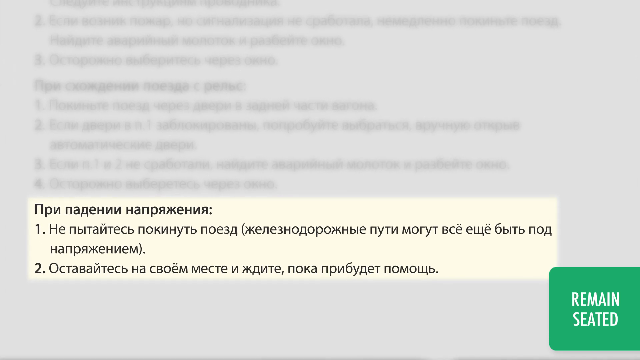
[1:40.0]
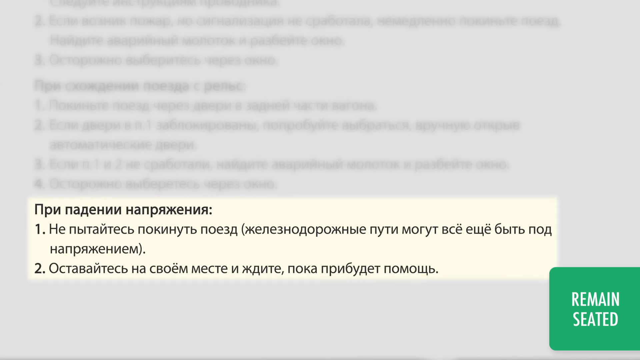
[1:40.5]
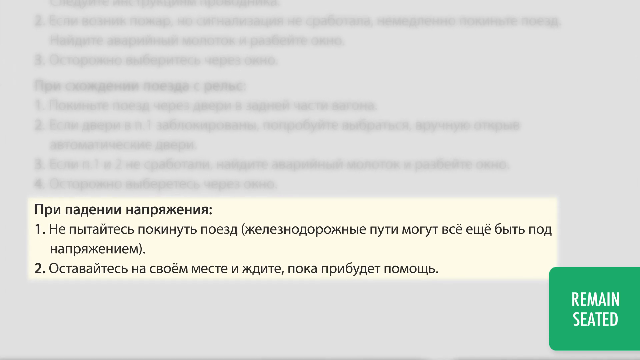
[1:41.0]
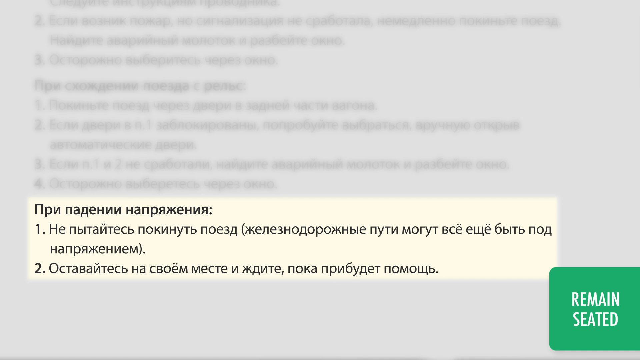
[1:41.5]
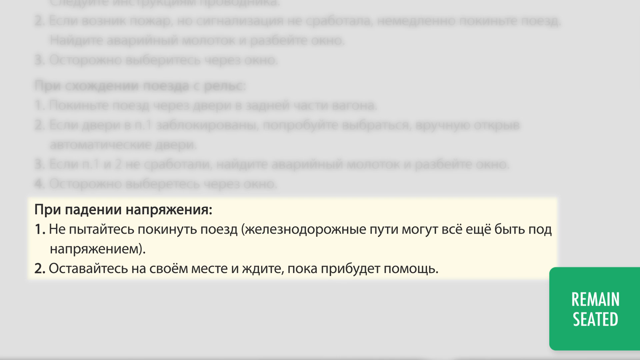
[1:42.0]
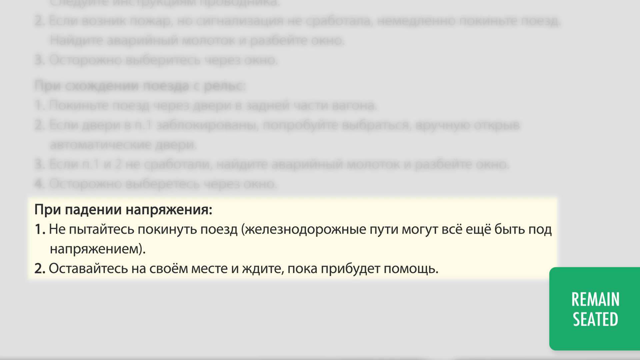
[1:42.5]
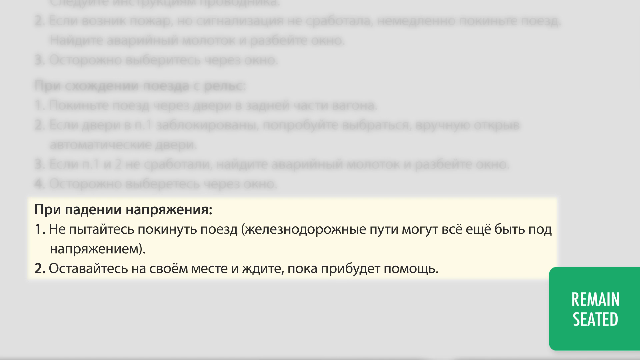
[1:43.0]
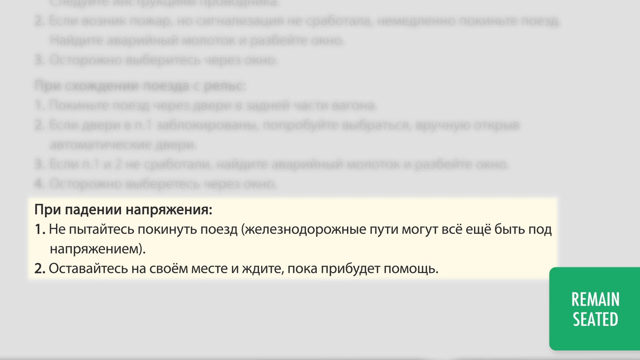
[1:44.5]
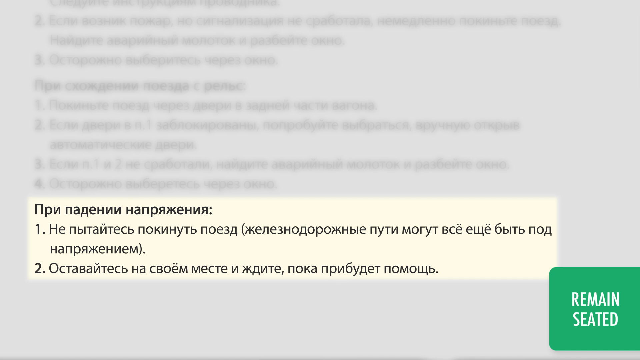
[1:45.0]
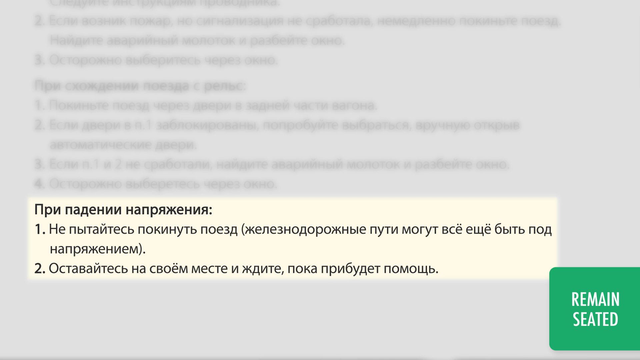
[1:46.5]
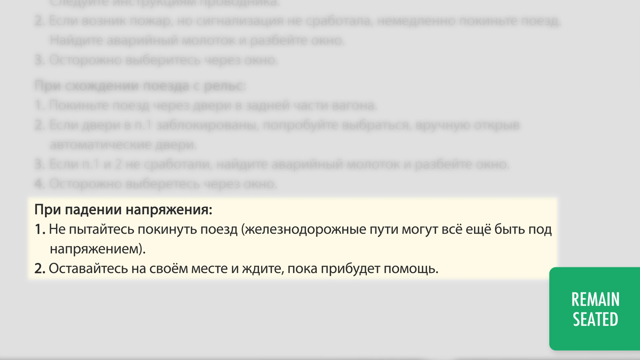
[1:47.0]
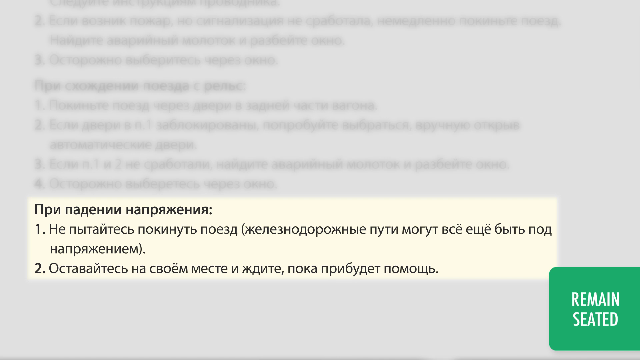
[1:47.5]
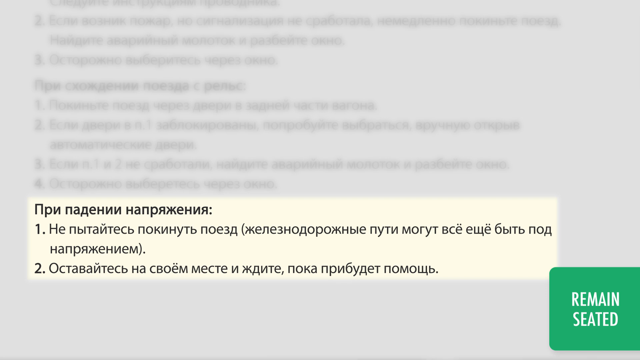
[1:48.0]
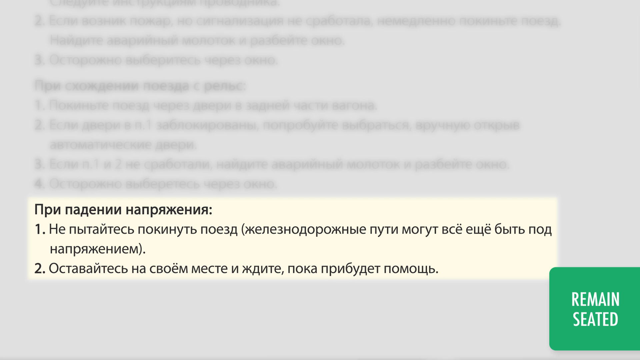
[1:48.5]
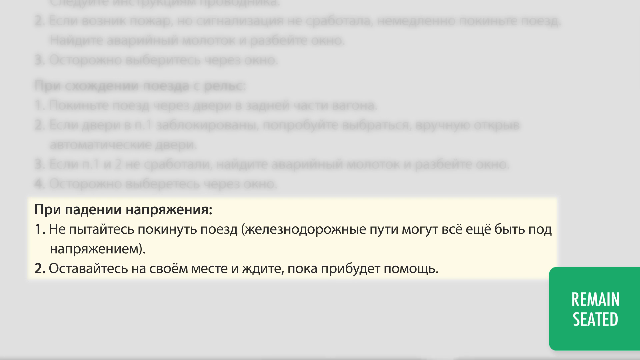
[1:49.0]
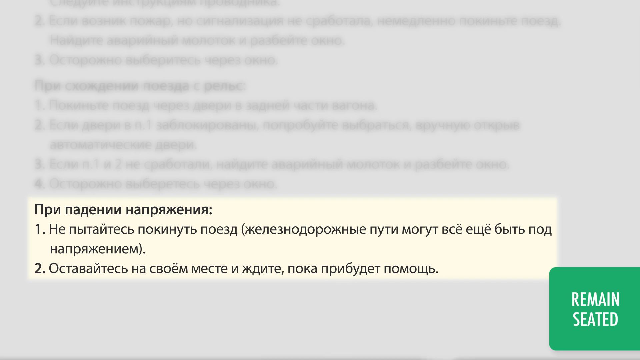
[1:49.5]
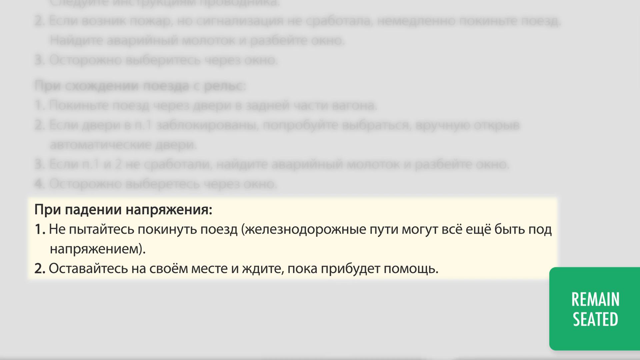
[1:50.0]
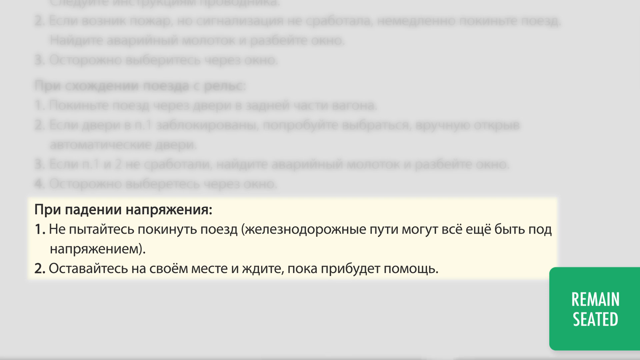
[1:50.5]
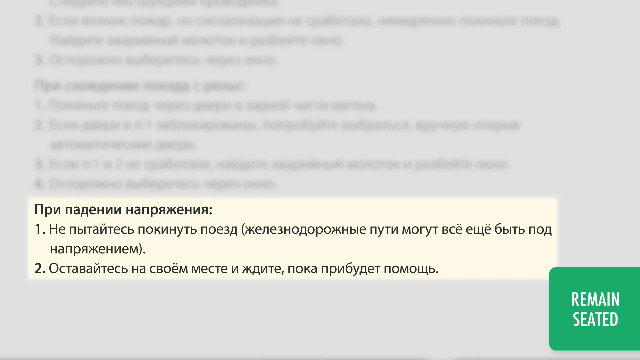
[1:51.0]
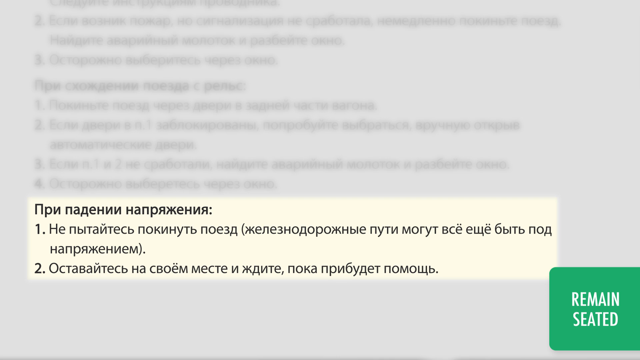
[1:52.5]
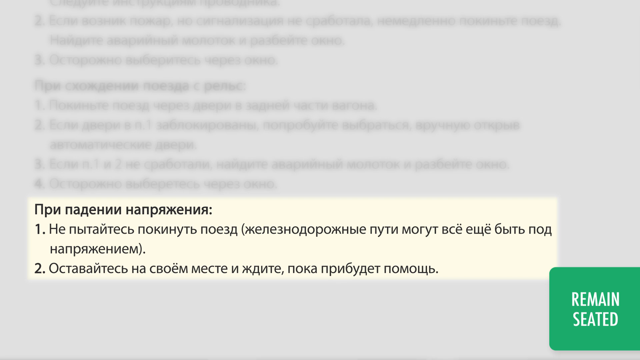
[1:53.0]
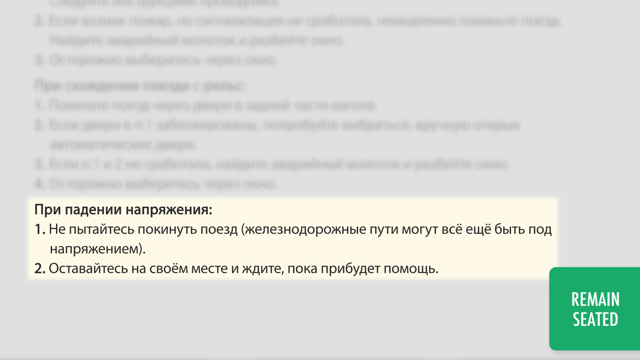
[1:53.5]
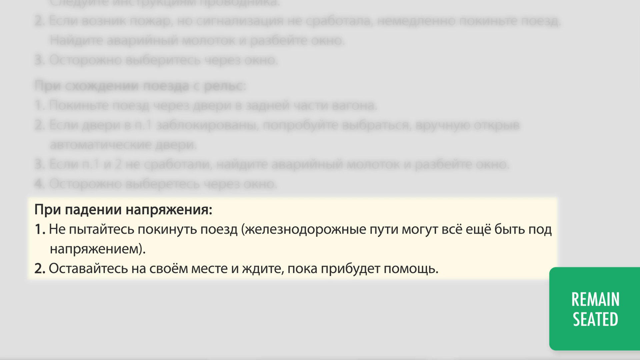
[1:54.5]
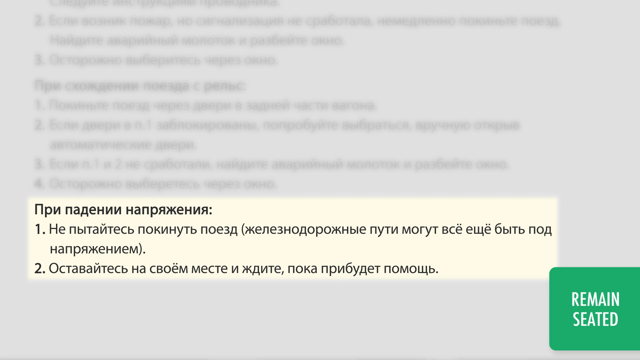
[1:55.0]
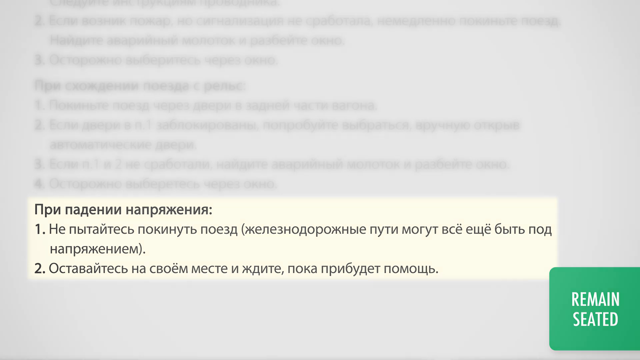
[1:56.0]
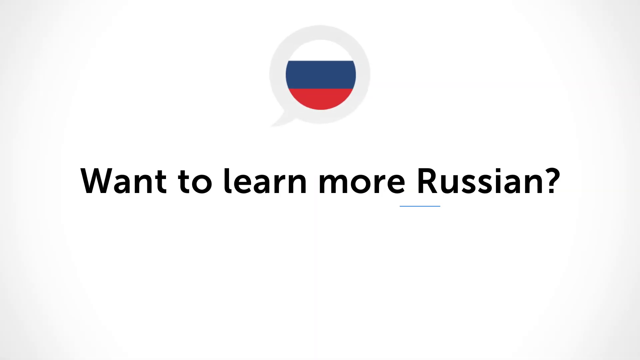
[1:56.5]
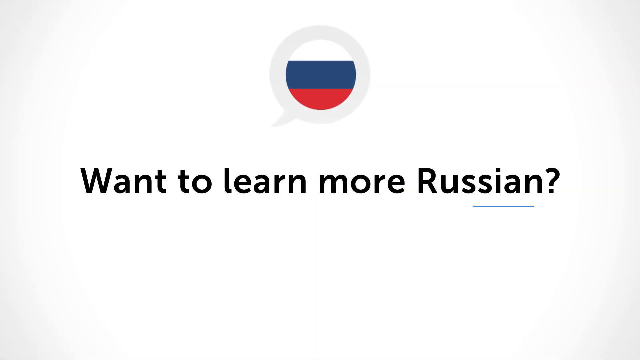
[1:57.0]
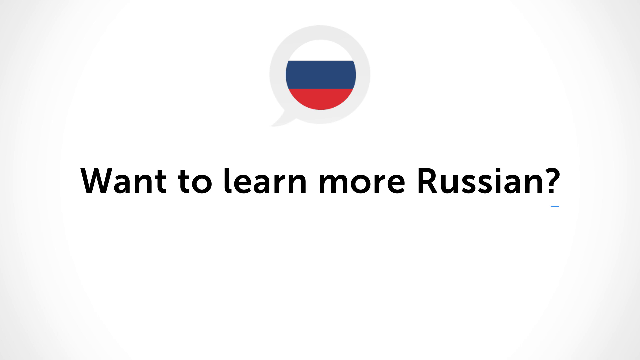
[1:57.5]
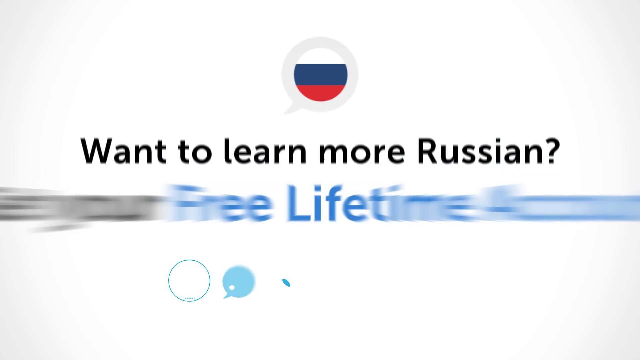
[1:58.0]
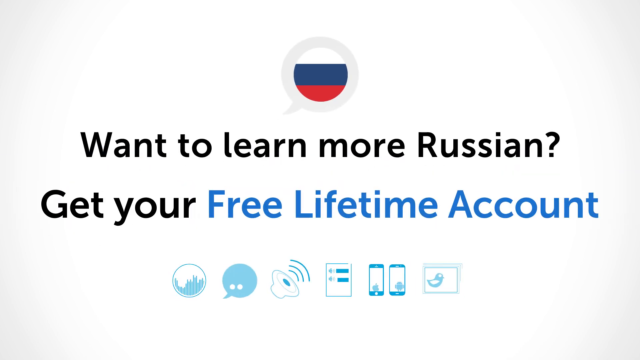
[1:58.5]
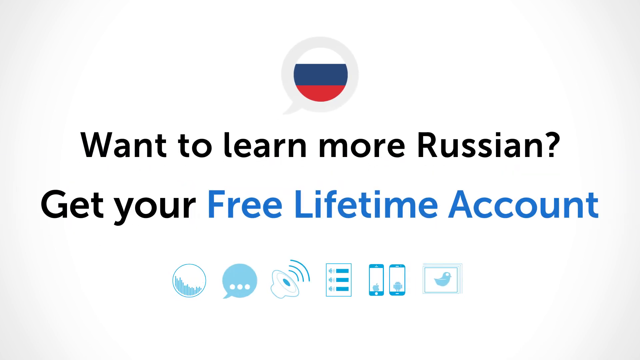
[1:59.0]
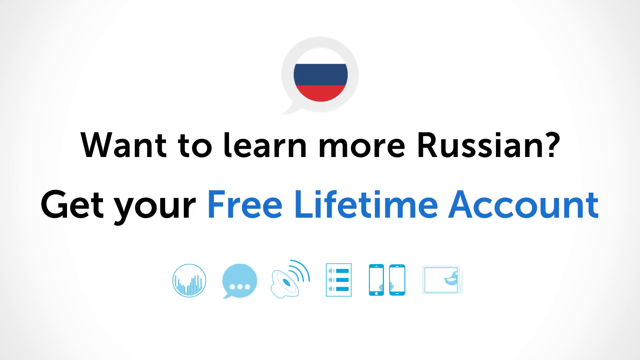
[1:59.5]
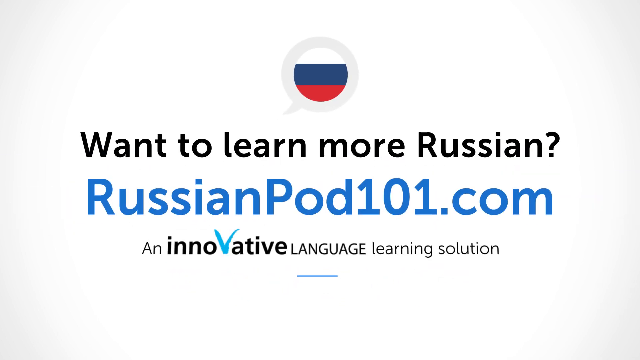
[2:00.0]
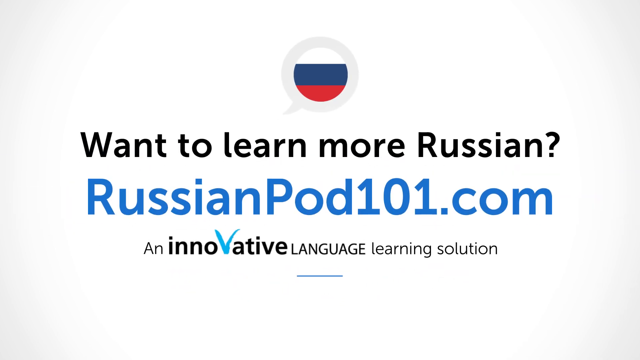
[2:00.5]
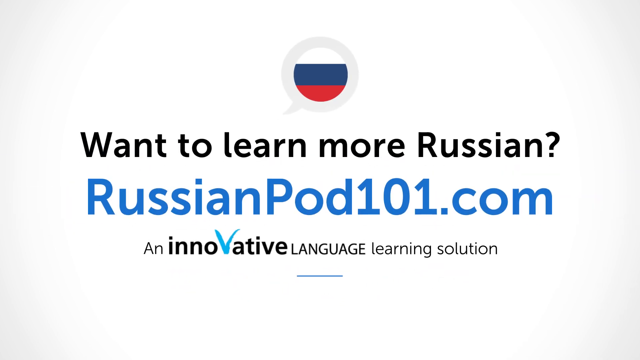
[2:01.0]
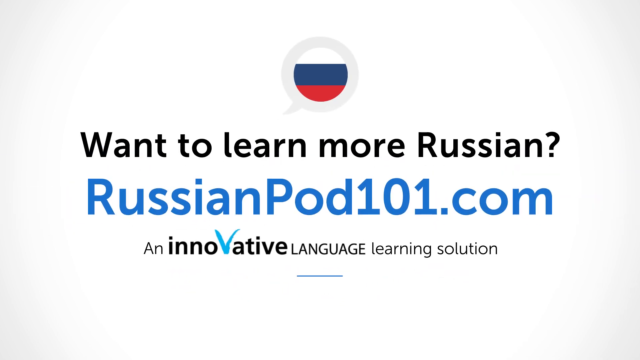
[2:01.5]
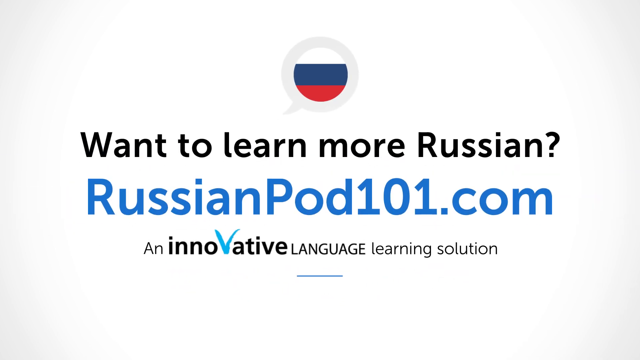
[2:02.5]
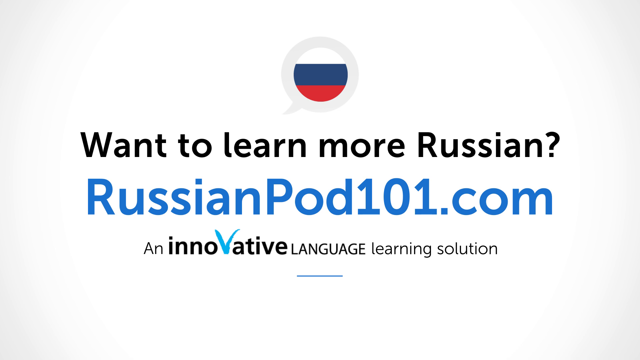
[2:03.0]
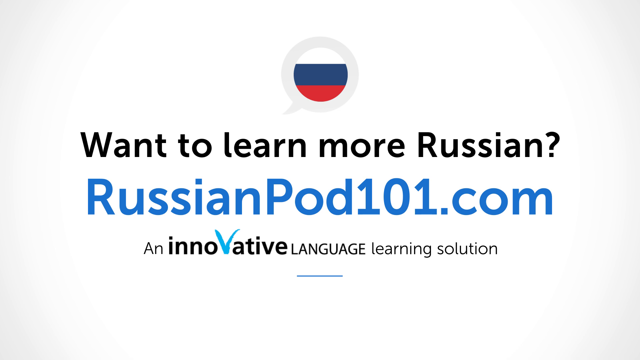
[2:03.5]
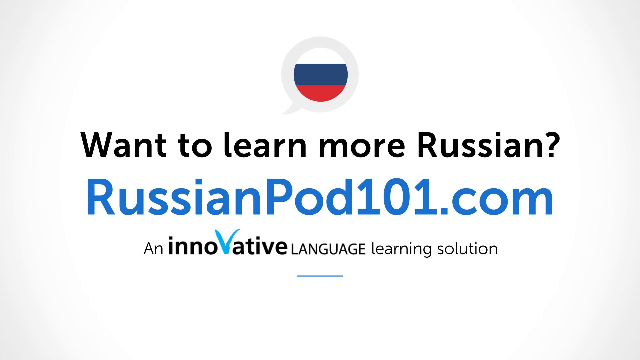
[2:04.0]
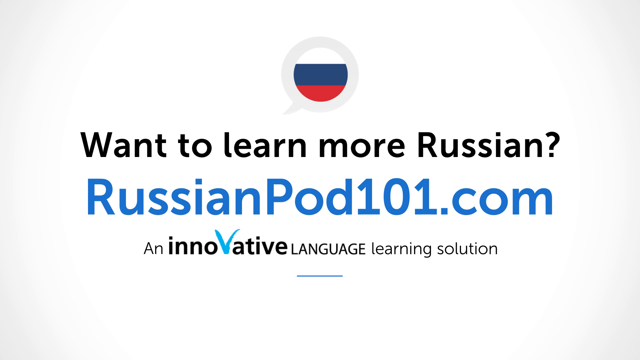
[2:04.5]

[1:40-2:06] The section of the page with two points is highlighted while the rest is faded out. The subheading and the words are in black on a white background. On the bottom right of the screen, "remain seated" is written in white on a green background, showing it was the answer to the question. The video then transitions to a white background with "Want to learn more Russian" written in black in the center of the screen. Above the words is a chat icon with a circle inside it in the Russian flag colors. A blue line traces underneath the words. The words "get your free lifetime account" then pop up underneath, with "free lifetime account" in blue, and several icons are shown below: some phones, a volume speaker and a chat box. These words are then removed, and the website "russianpod101.com" is shown in blue, with "an innovative language learning solution" written in black underneath.